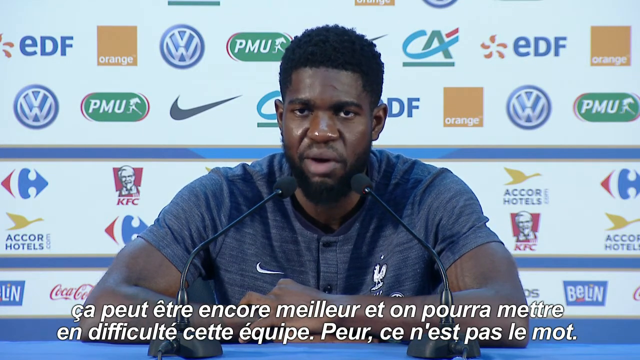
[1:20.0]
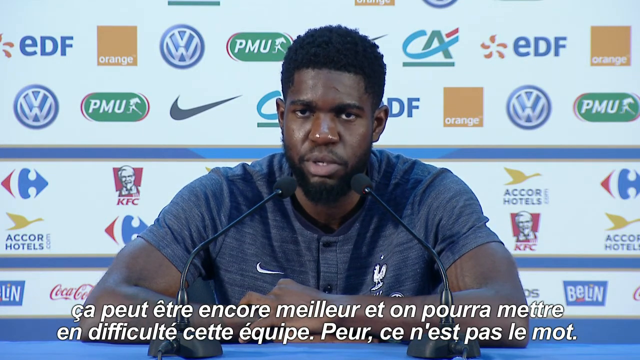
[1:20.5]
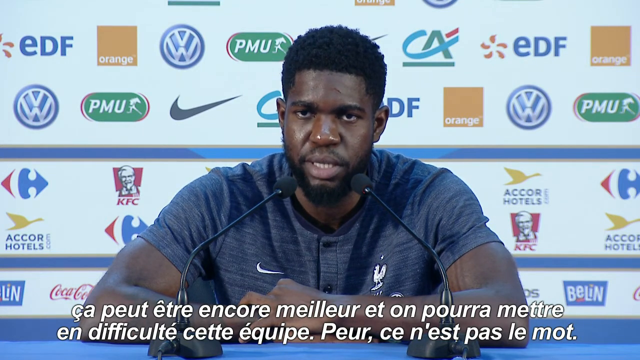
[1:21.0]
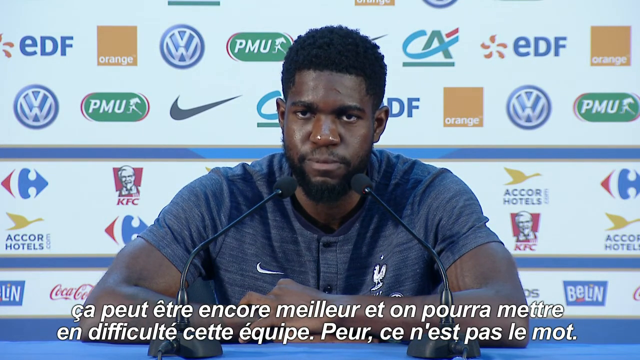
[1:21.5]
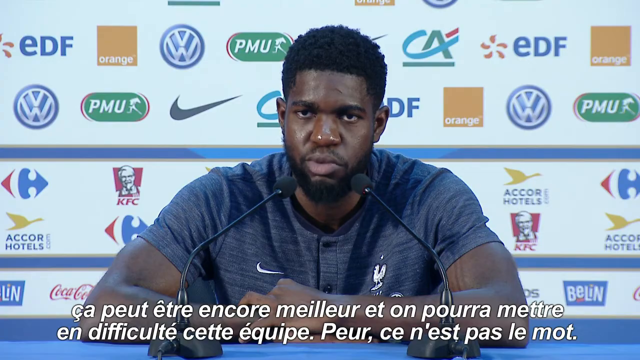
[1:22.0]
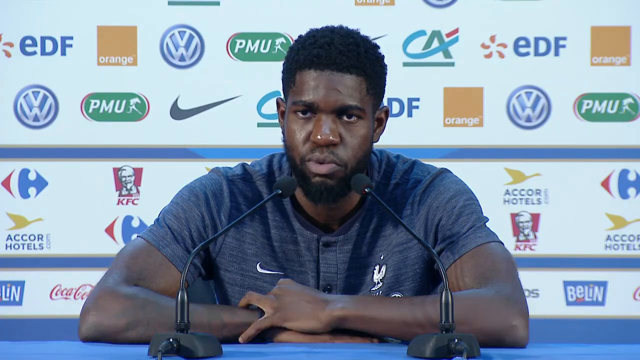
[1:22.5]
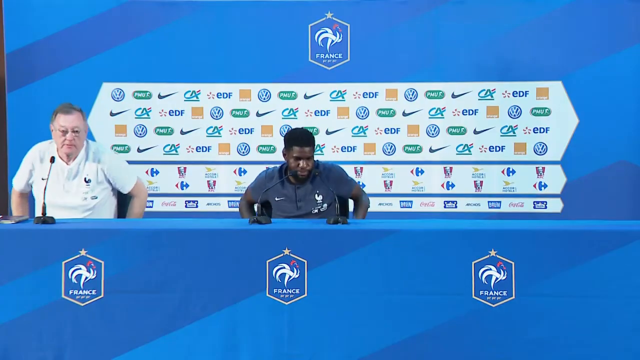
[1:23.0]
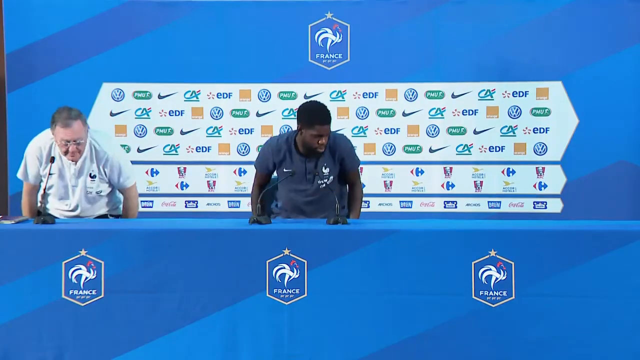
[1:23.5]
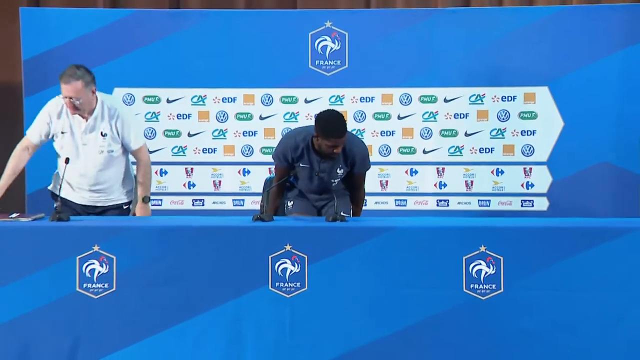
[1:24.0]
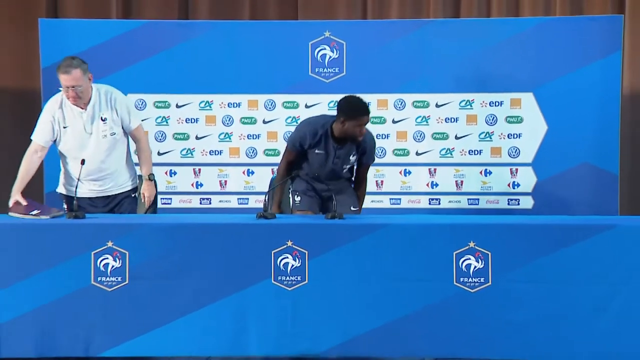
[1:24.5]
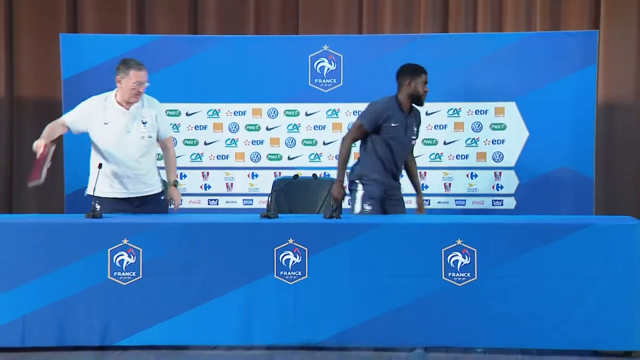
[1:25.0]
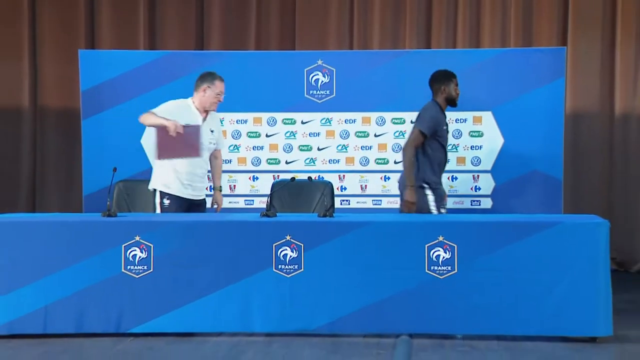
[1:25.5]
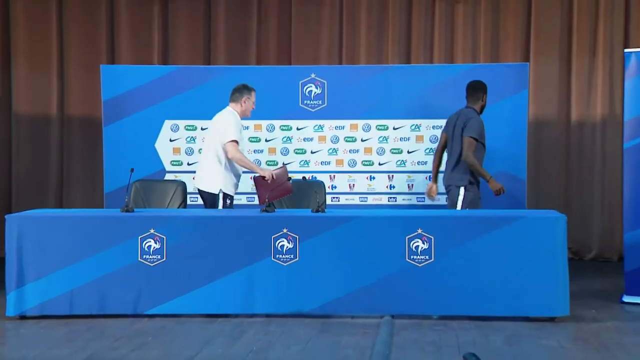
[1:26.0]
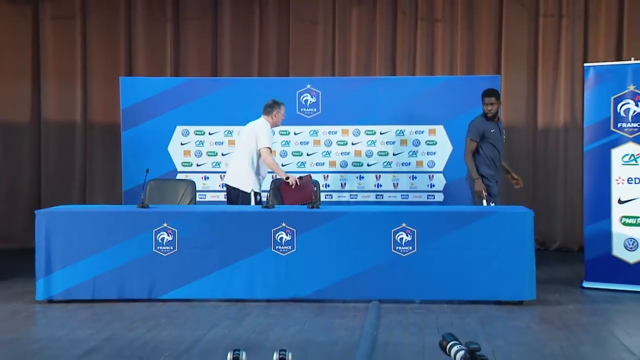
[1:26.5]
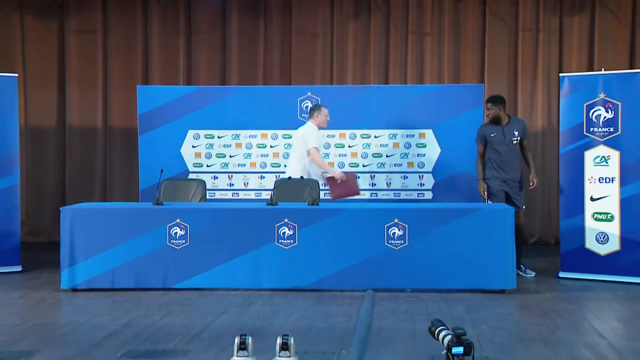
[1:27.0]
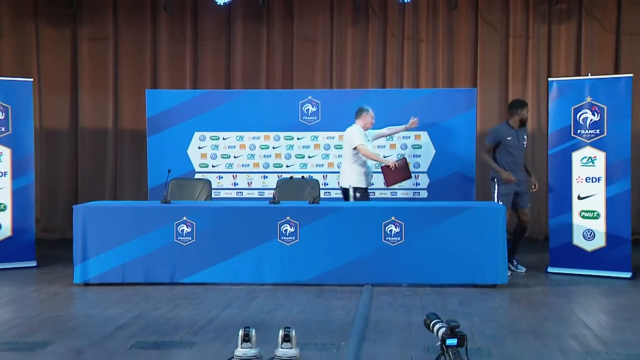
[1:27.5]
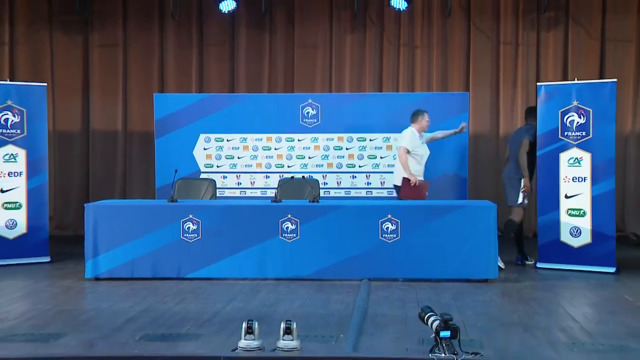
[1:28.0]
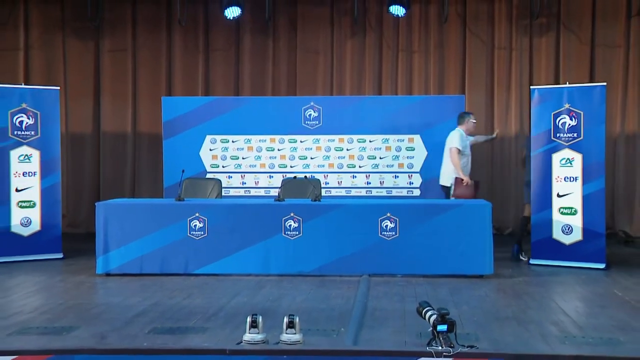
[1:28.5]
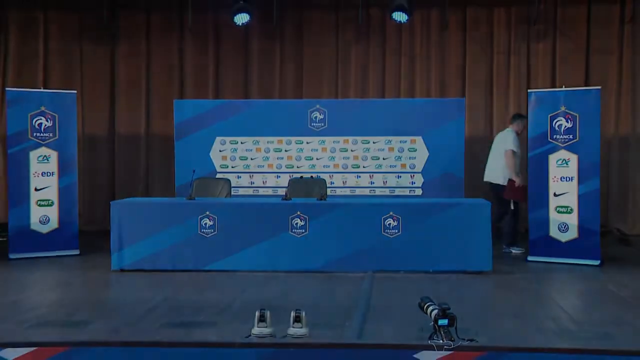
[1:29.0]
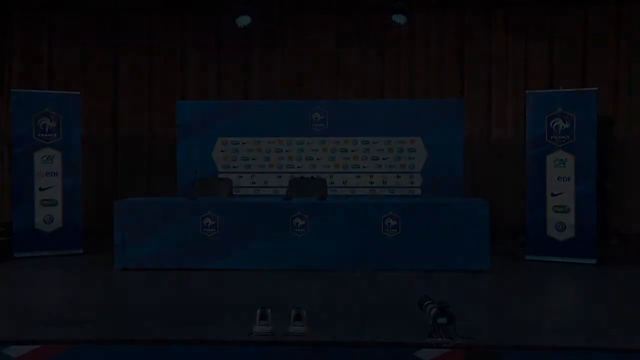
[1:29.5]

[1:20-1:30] The right side of the player's mouth is slightly higher than the left, with a deeper crease, and his mouth is open a little wider. He looks straight forward, and his lips come together in an O. The video cuts to a wide shot of the press conference: a blue table with a blue background, and three logos of the event in front. On the far left is a white man in a white polo shirt with his arms bent at his sides and one microphone in front of him. The player has both hands pressed on the table, then reaches down to both sides of his chair, and both men rise. The white man grabs a book on the table with his right hand, his left arm down, while the player turns to the left with his arms by his sides. Both men start walking off to the left. The player turns around and looks over his right shoulder, and the white man raises his left hand, palm open, straight ahead. The player looks in the same direction, to the left, then goes behind a freestanding banner on the right side and vanishes, while the white man drops his arm and follows him. As the shot widens, a camera is visible at the bottom of the screen and another freestanding banner is on the left, and then the screen goes black.